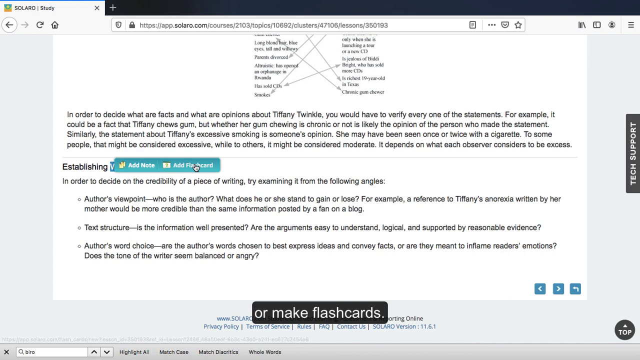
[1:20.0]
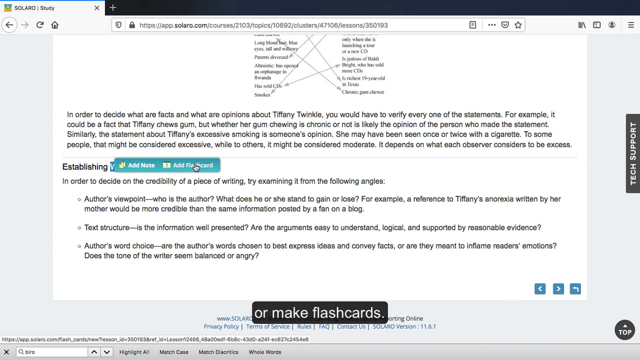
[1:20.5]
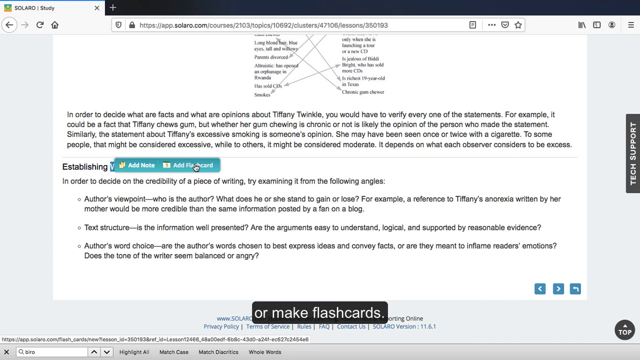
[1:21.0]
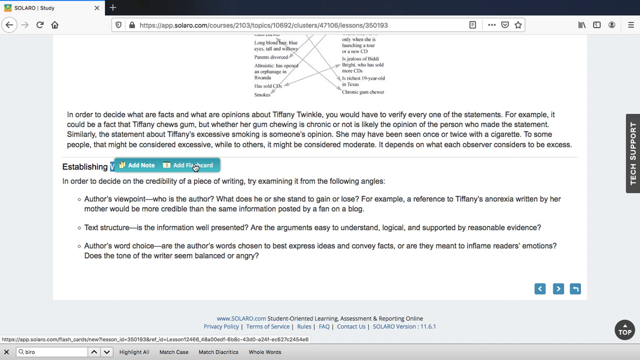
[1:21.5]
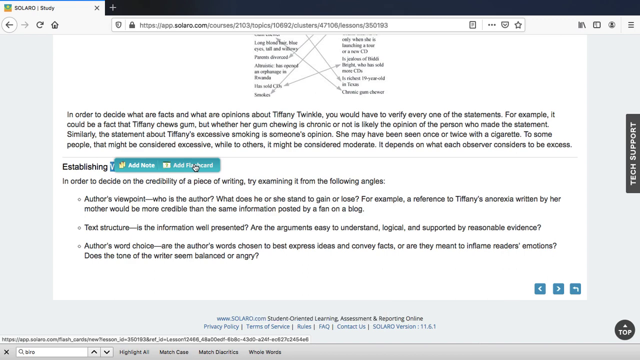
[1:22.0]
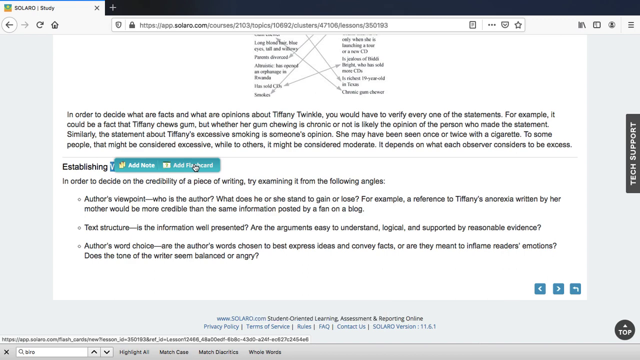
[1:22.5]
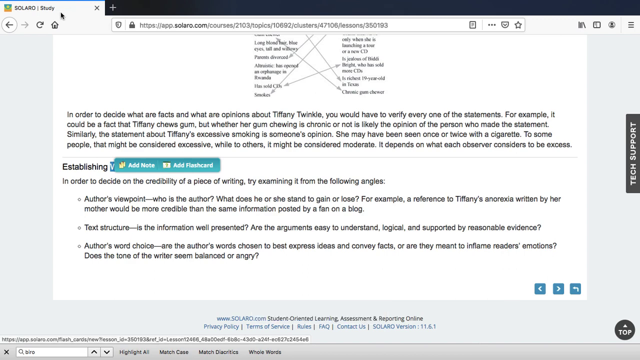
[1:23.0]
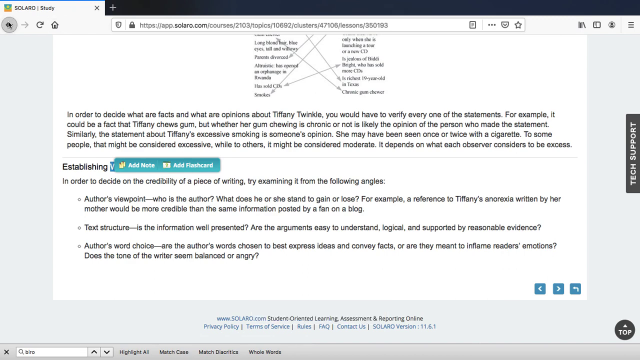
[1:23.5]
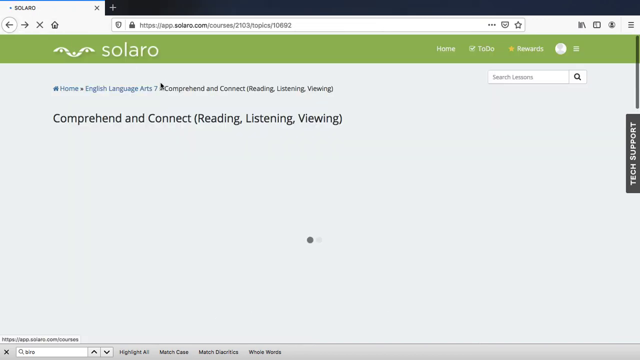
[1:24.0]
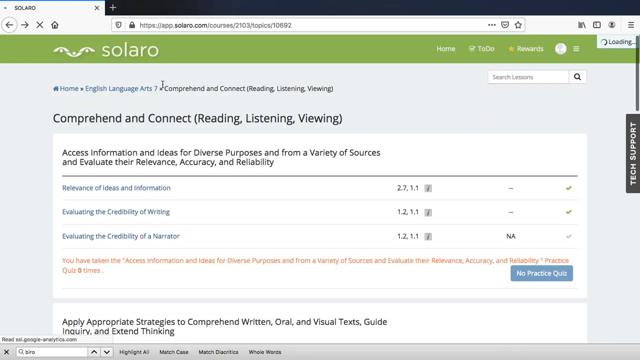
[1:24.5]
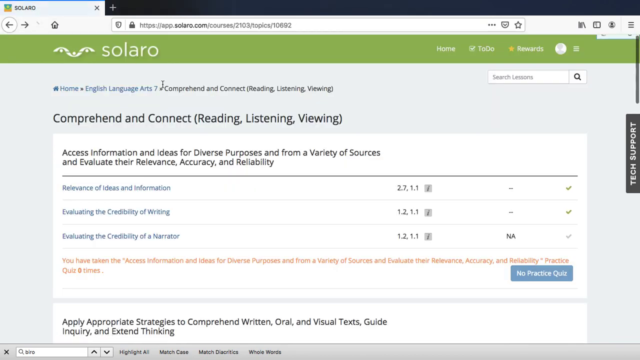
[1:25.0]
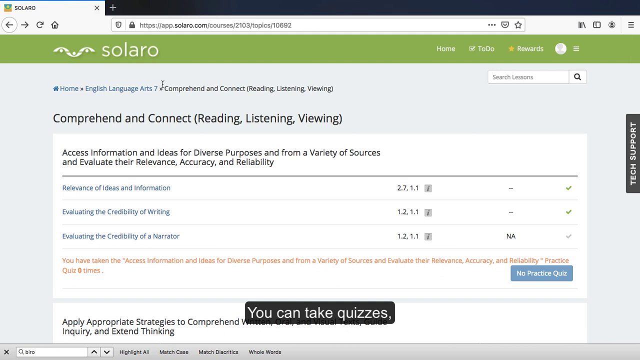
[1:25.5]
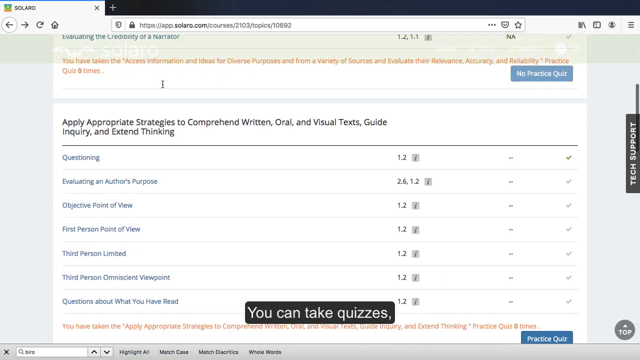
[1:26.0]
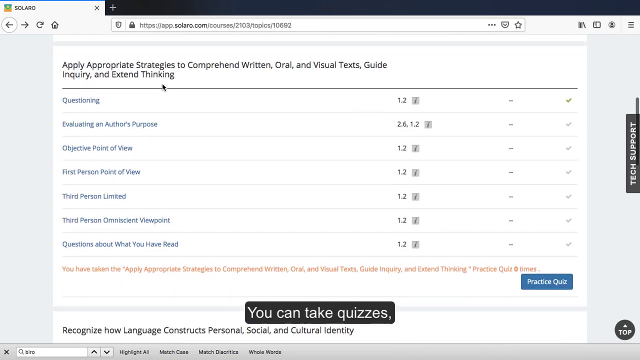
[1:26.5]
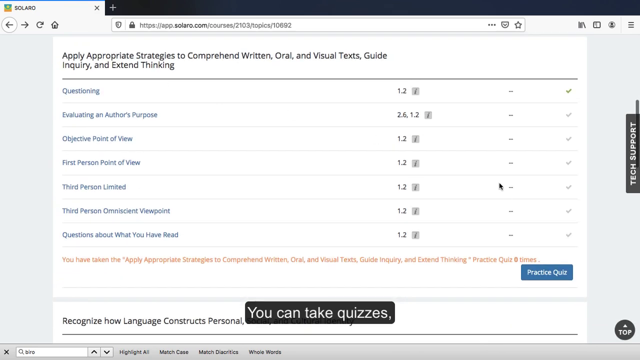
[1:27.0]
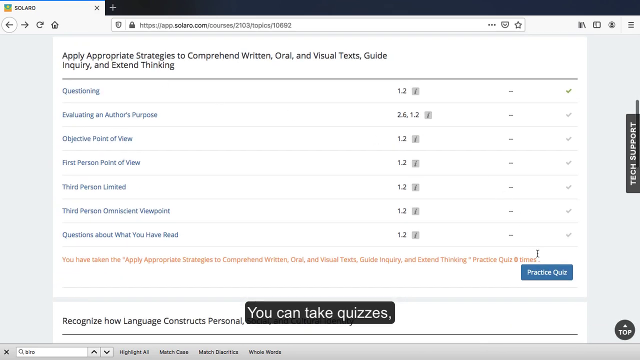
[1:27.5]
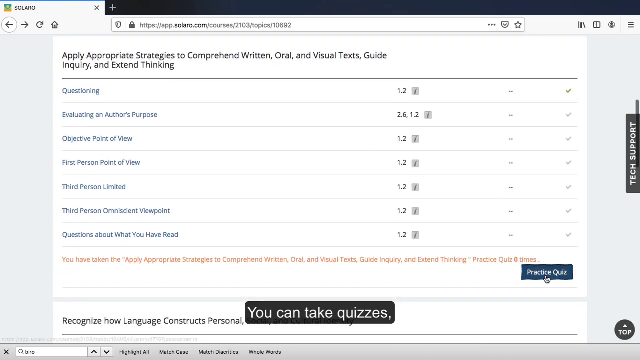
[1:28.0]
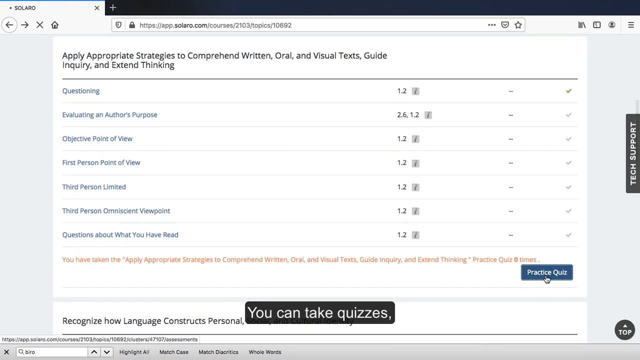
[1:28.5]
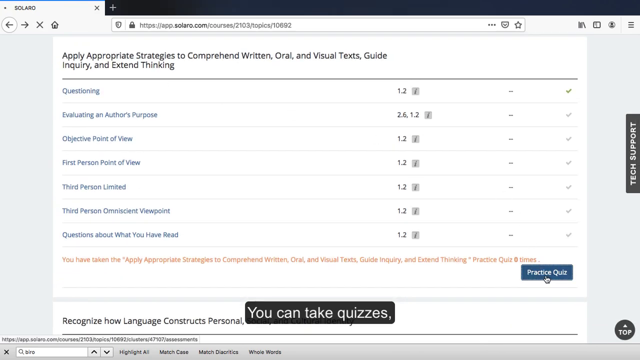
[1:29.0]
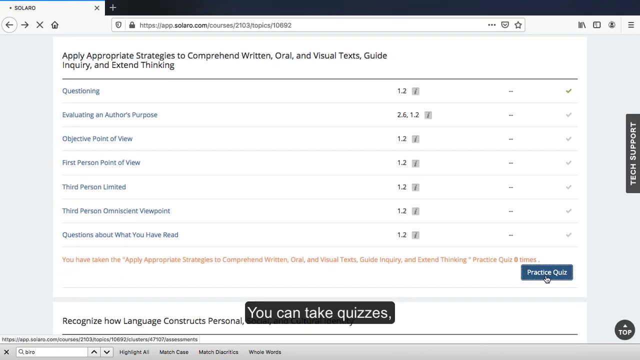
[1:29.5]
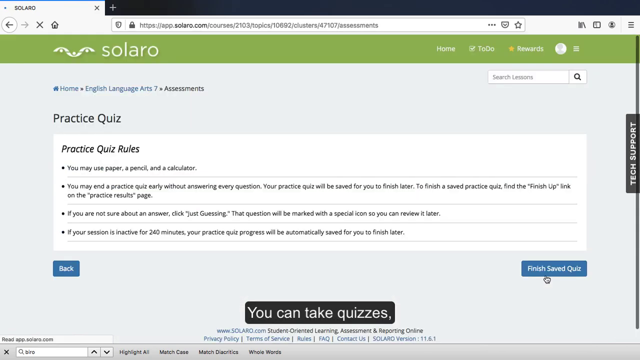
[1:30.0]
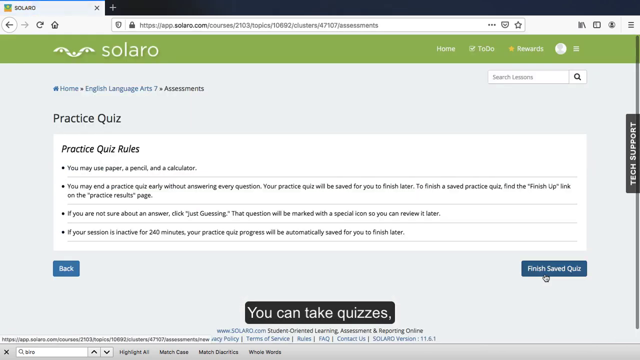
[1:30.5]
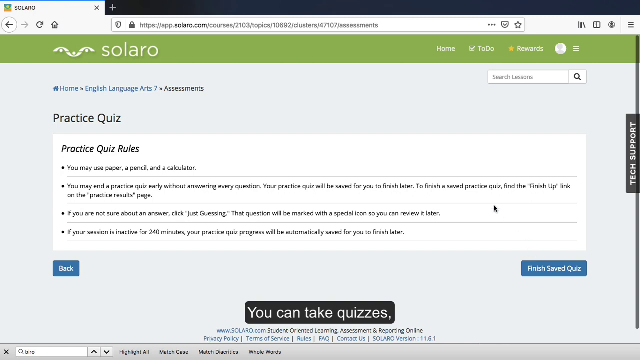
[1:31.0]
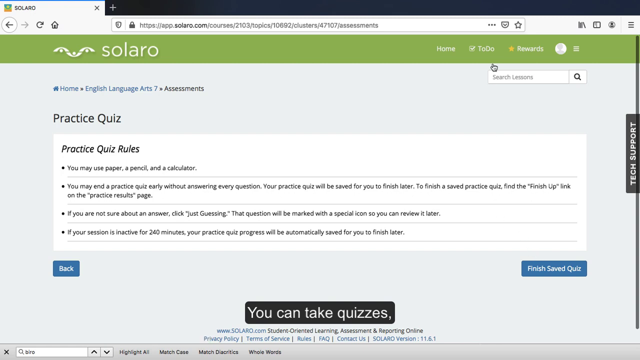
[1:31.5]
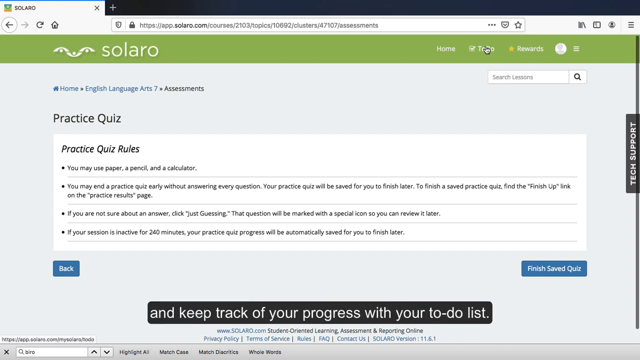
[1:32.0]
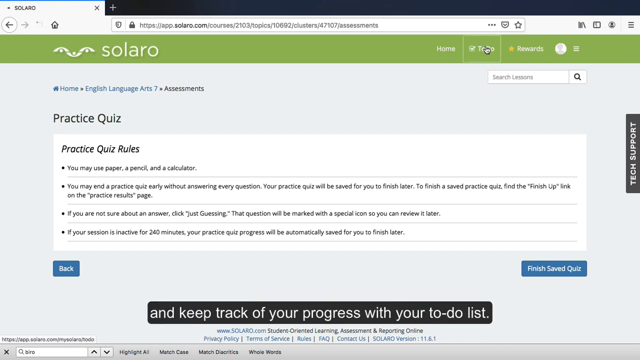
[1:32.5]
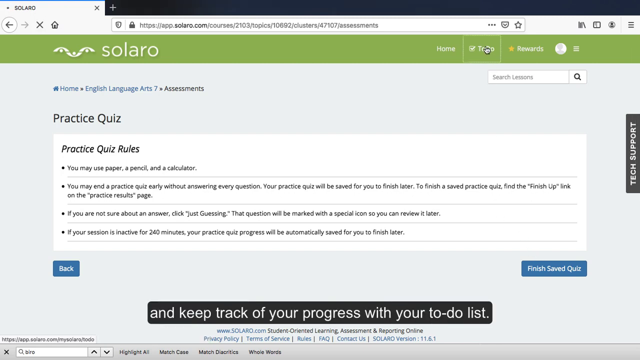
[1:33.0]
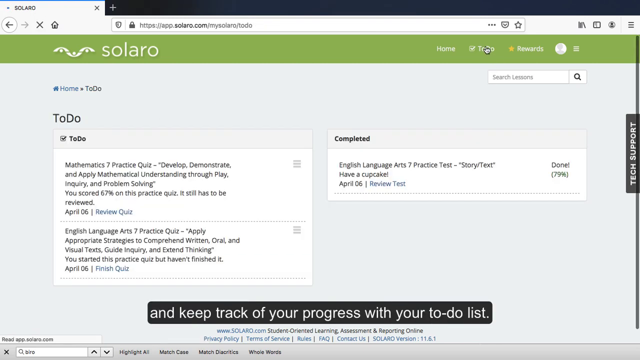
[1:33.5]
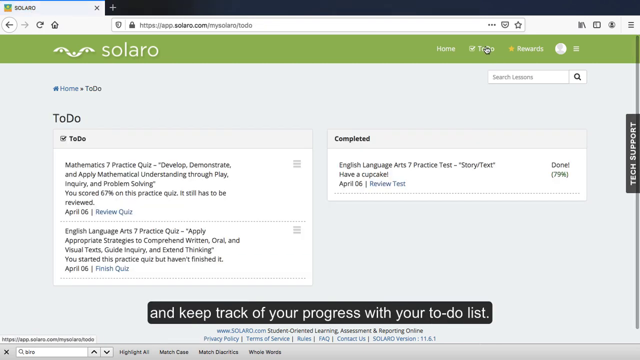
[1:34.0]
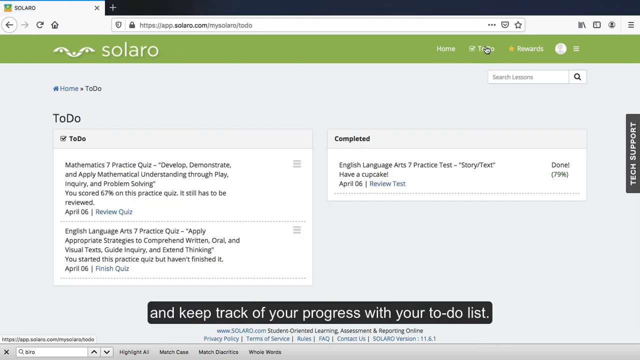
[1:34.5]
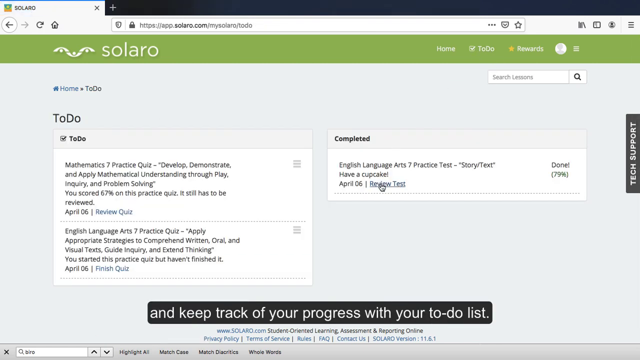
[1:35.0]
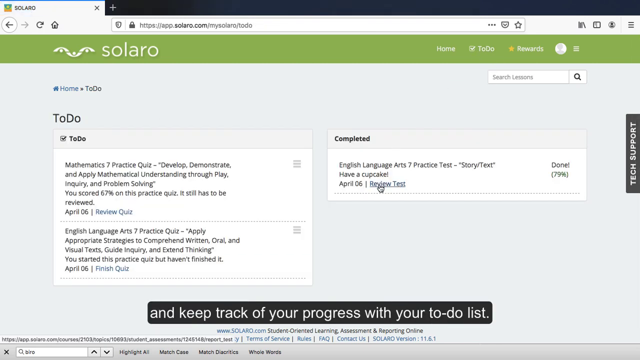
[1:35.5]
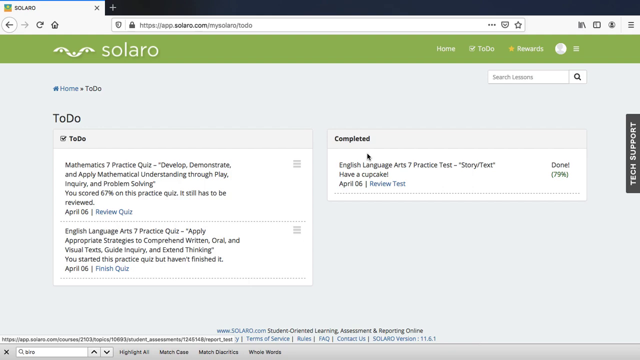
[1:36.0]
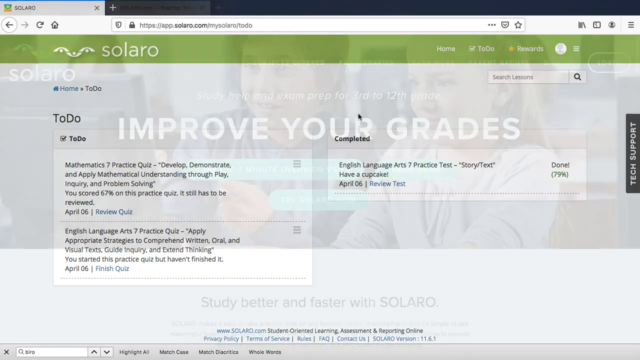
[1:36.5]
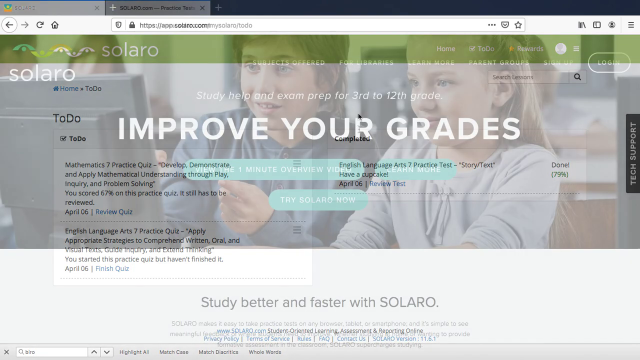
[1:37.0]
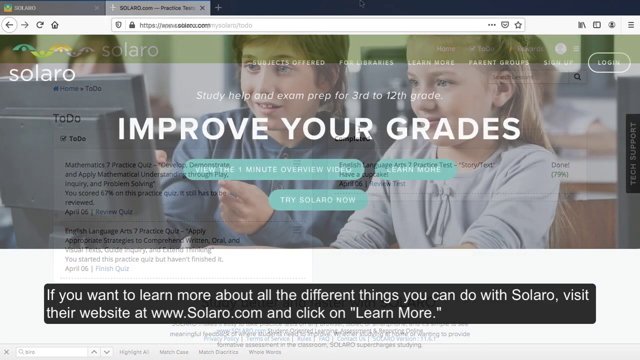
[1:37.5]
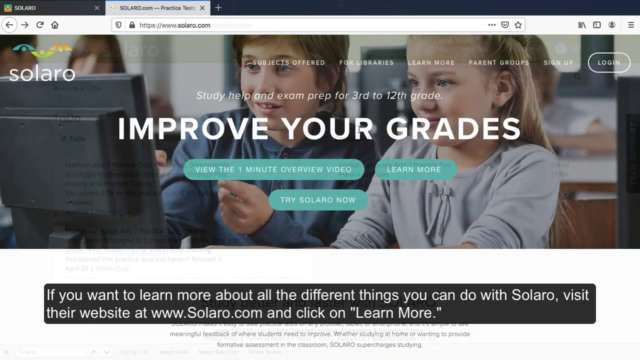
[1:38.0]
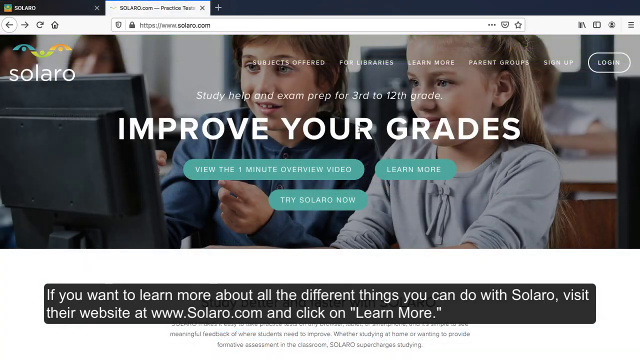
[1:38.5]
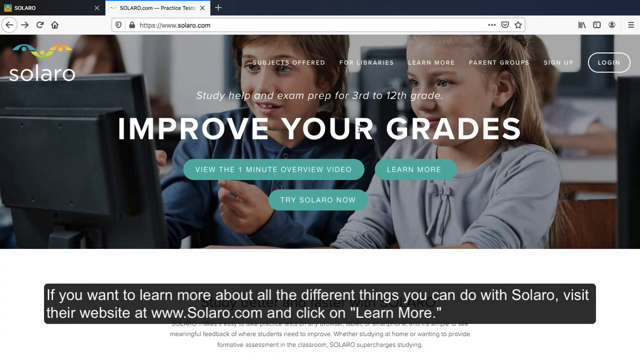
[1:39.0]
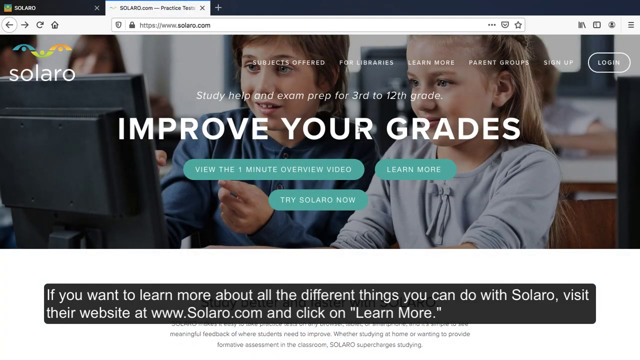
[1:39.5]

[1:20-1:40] Pages of the Solero app show items such as "establishing", "add notes", "Solero", "comprehend", "connect", "reading", "listening" and "viewing", information about specific lessons, and "rewards", "to-do" and "home". Practice quiz rules and related information are also shown. The video then shows two children, probably around seven to eight: a boy with short brown hair in a blue shirt, and a girl with kind of long dirty blonde hair in a grayish blue shirt, looking at a computer screen with what is kind of Solero text. No other people appear; otherwise the video consists of different pages being swapped.